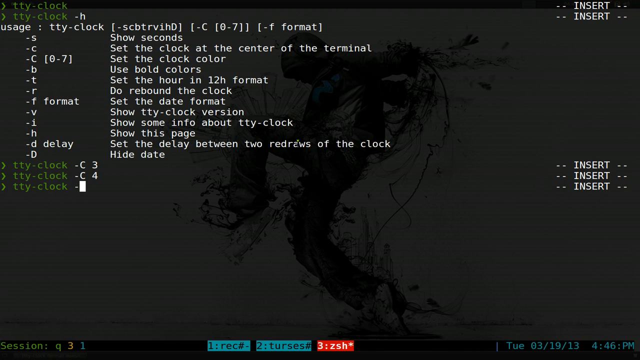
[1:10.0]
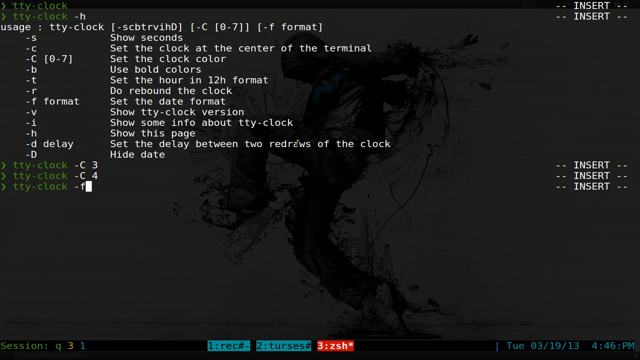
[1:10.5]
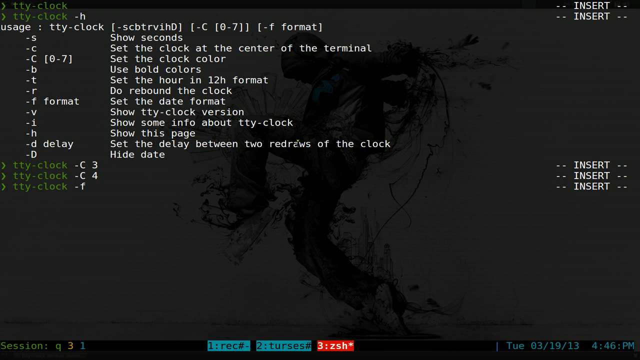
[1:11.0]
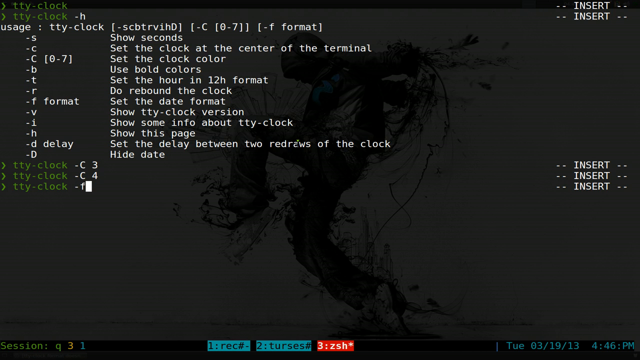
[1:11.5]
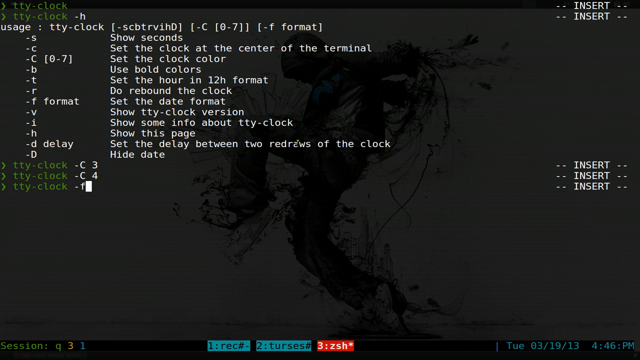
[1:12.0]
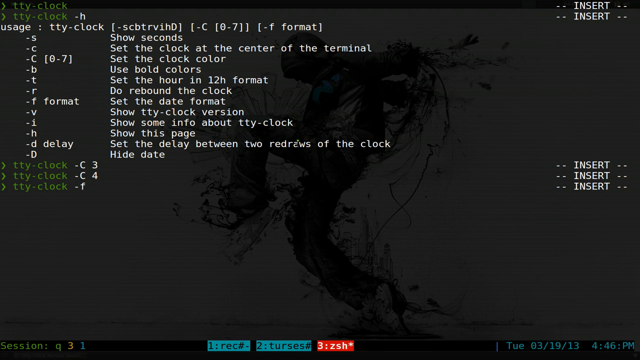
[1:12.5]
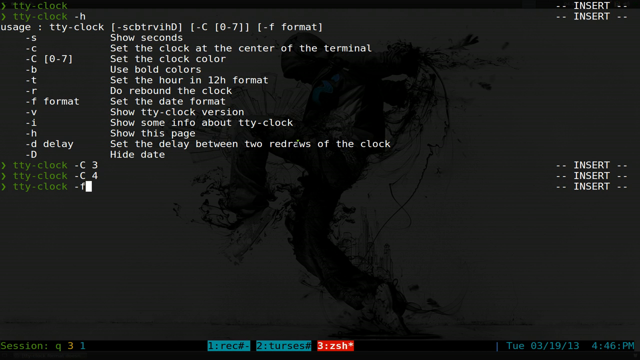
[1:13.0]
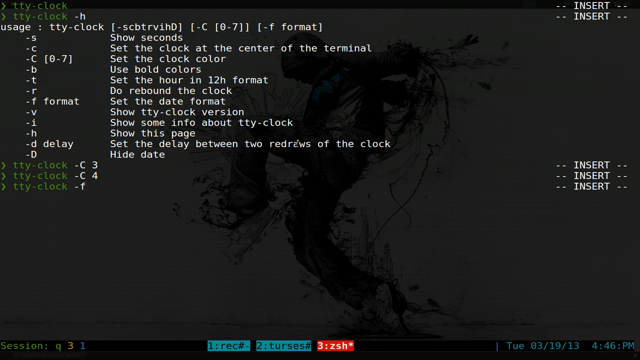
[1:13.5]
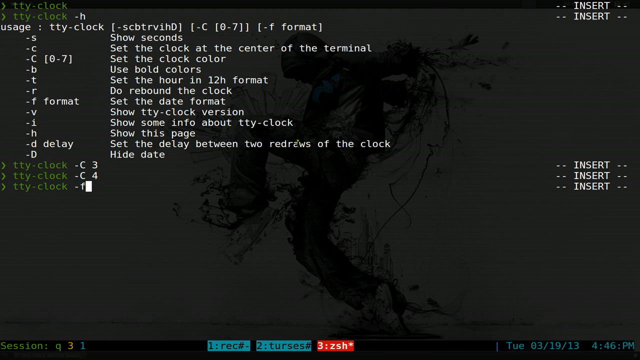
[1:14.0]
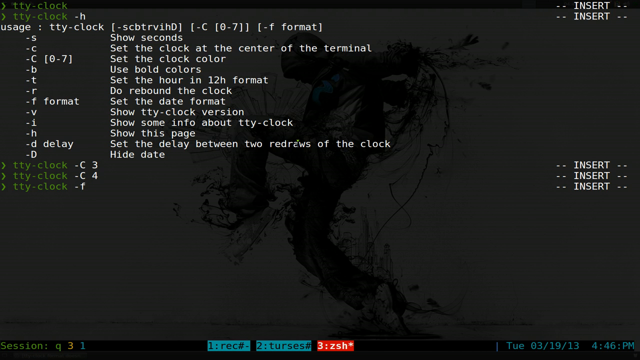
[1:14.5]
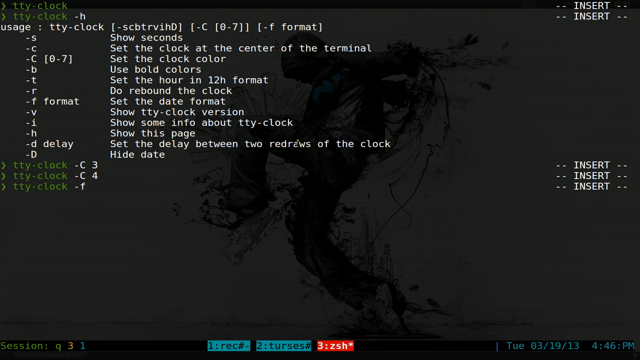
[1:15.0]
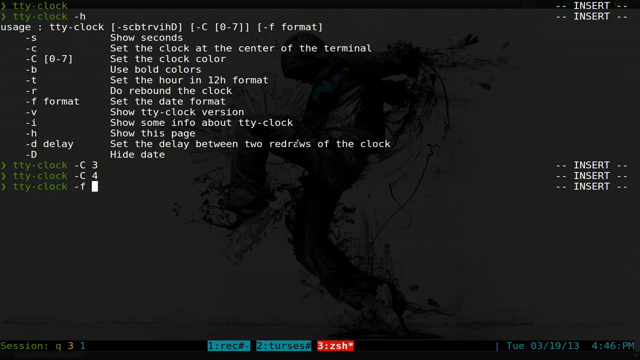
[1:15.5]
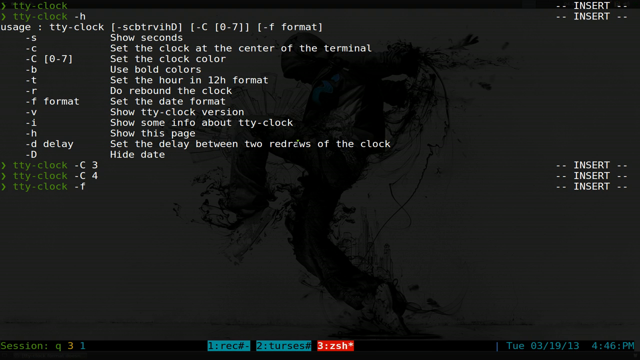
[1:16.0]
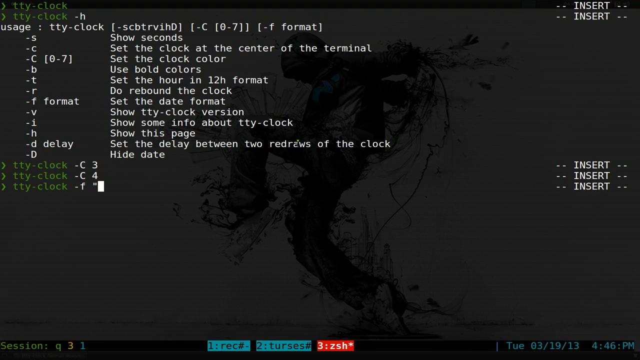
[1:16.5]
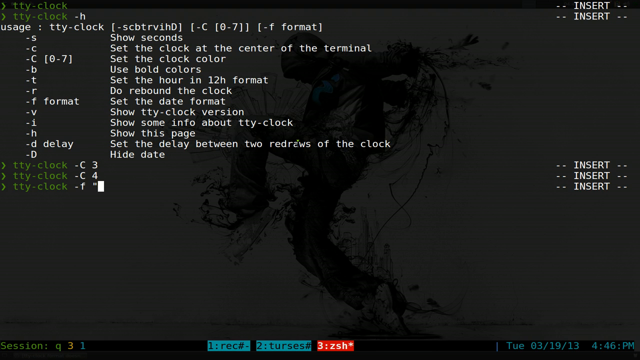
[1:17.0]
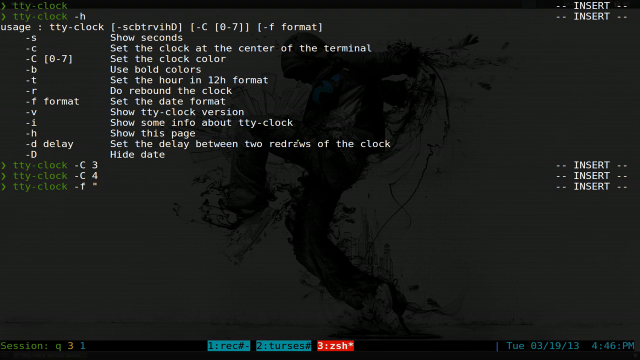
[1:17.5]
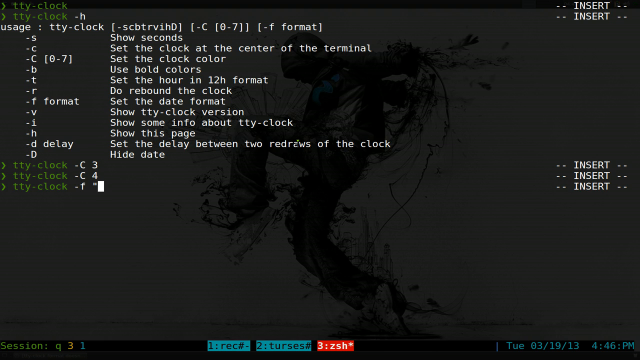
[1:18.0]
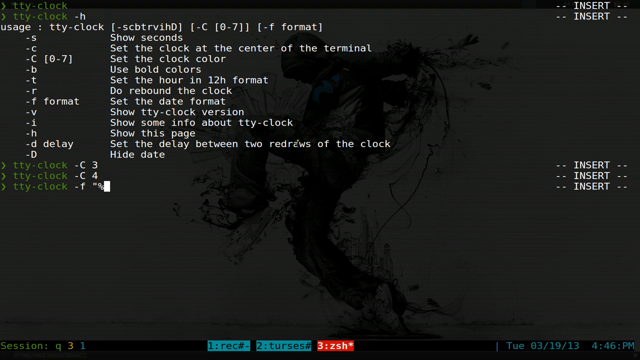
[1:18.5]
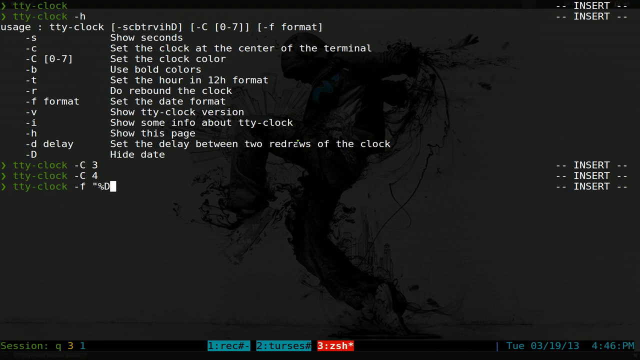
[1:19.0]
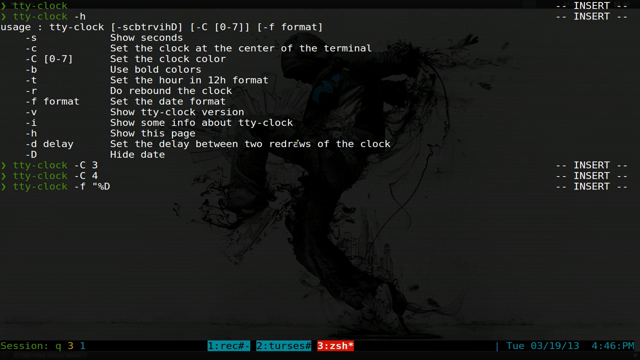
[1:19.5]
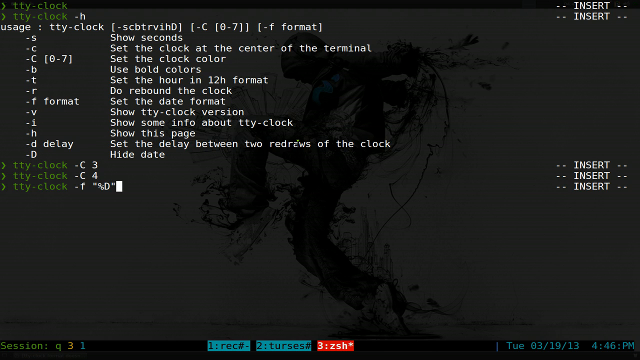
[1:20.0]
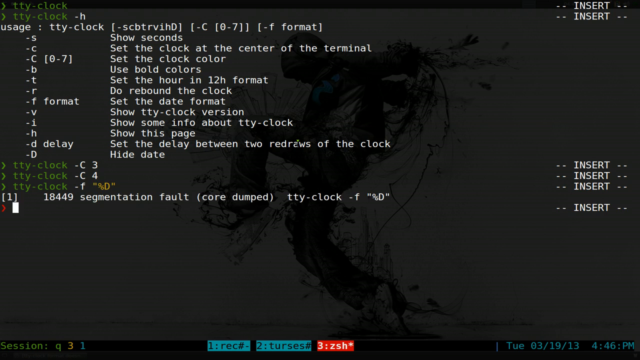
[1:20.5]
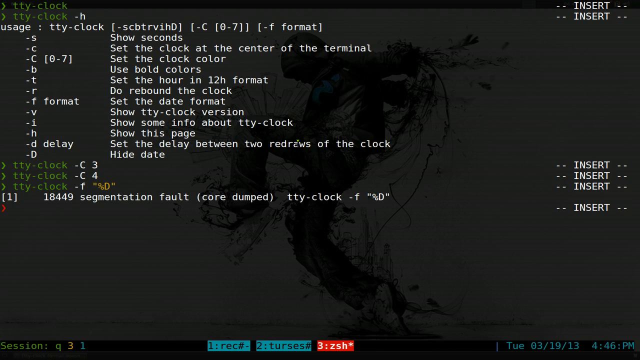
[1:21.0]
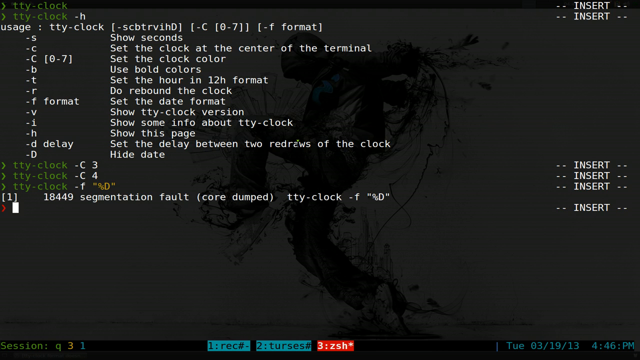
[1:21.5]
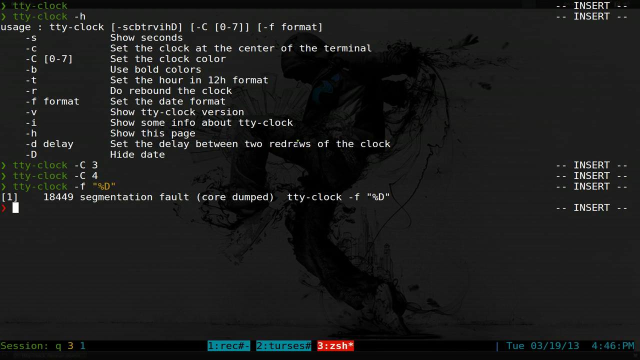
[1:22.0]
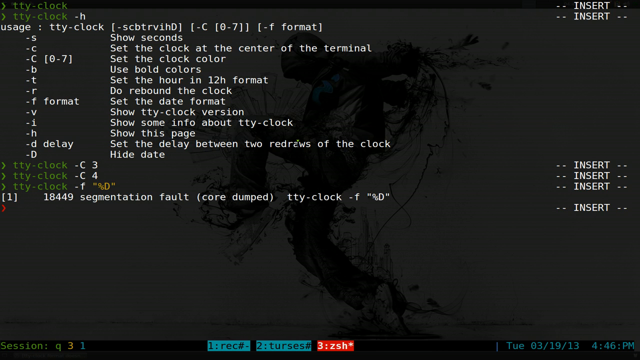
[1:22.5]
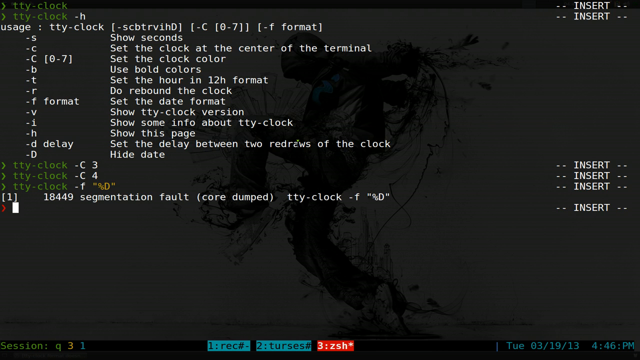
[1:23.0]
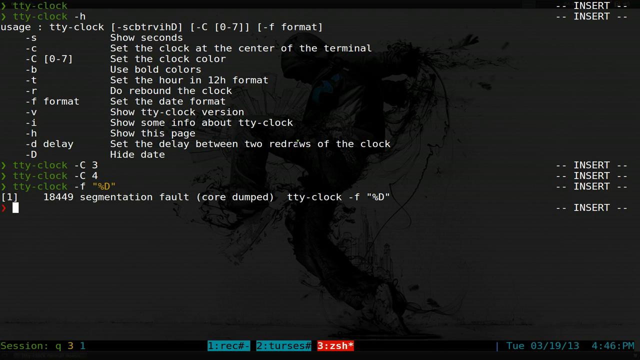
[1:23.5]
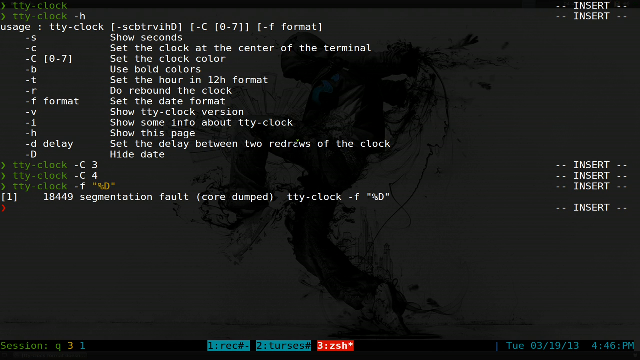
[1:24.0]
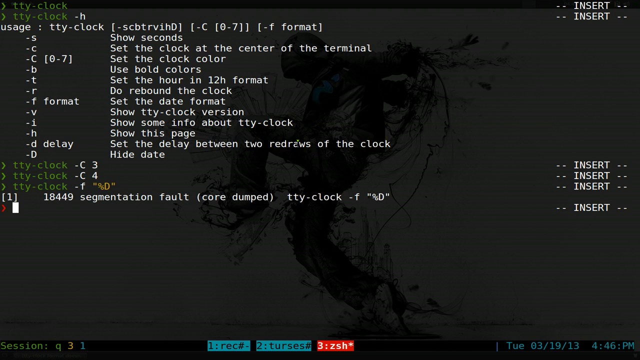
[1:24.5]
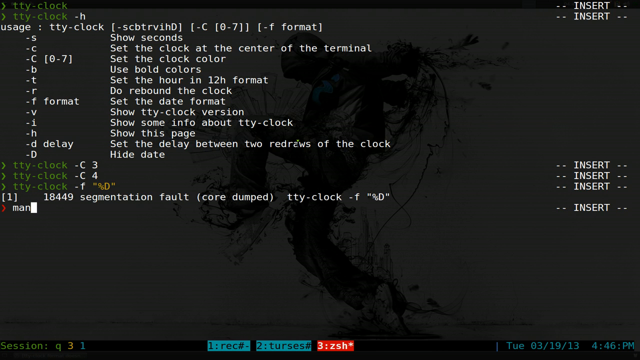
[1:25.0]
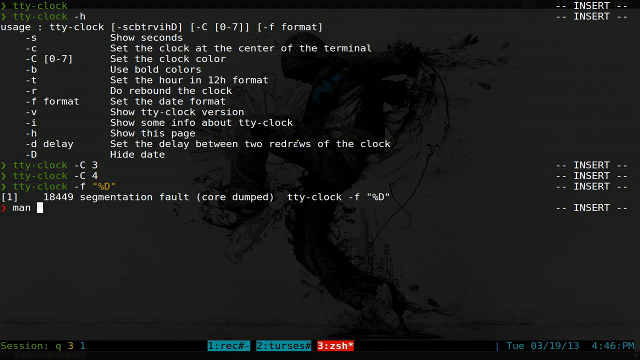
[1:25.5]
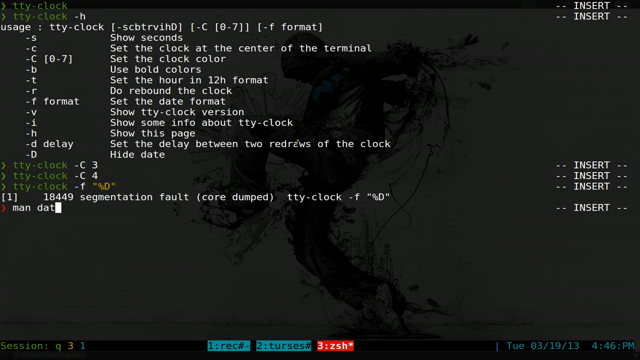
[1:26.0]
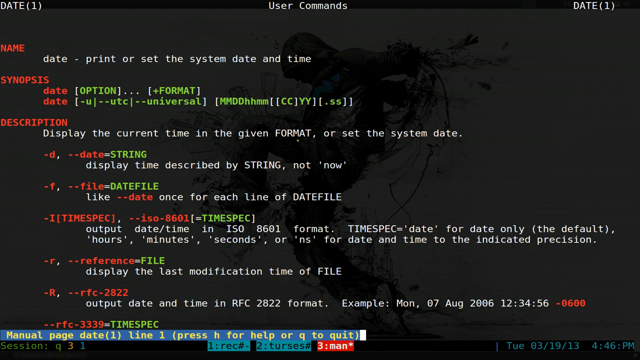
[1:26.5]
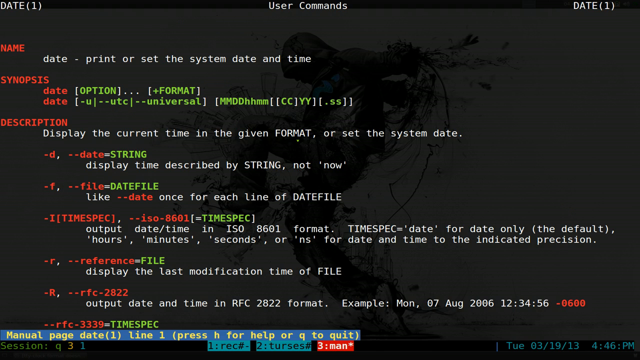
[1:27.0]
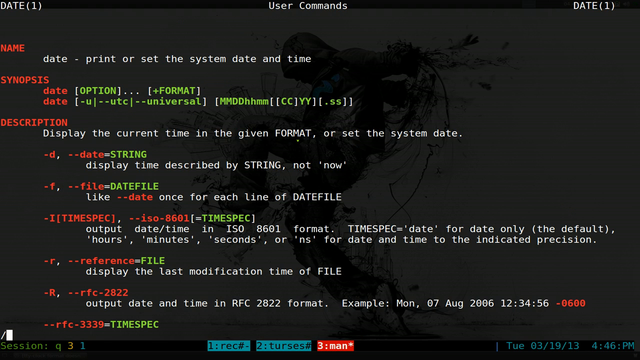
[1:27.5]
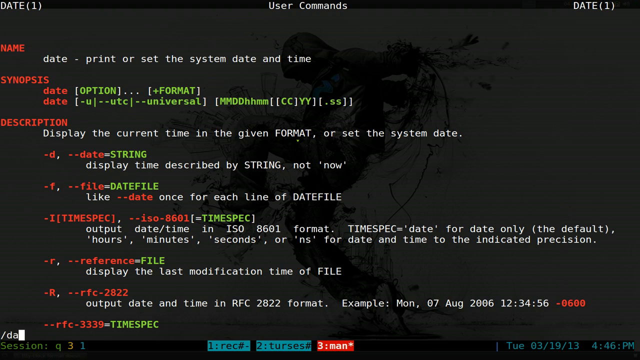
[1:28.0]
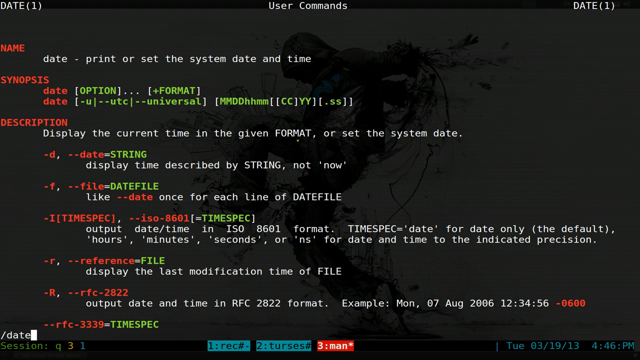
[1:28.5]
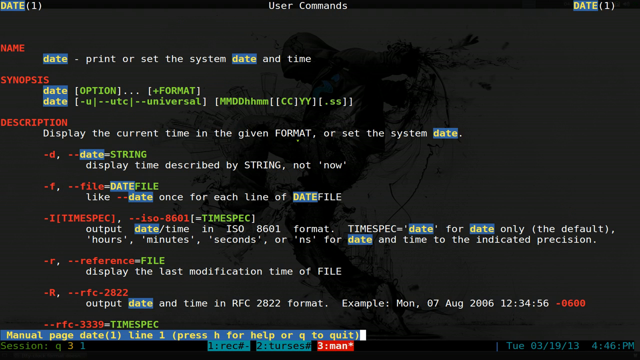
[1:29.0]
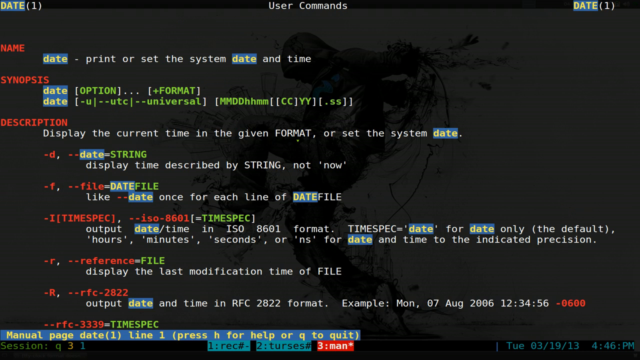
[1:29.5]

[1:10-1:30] On the black command line screen of a computer's operating system, about 12 rows show different commands or options for using the command tty.clock. The cursor blinks and then the option "-F" is typed; the cursor continues to blink, a space follows, and "-\D" appears. Below that is a response in white text that includes "1-8-4-4-9" and "Segmentation faults", along with "tty.clock -F \D". The cursor blinks again and an additional command is typed. The screen then fills with lots of responses in white, green and red text giving a detailed explanation of the command's options, such as "dates=string" and "dates=file".